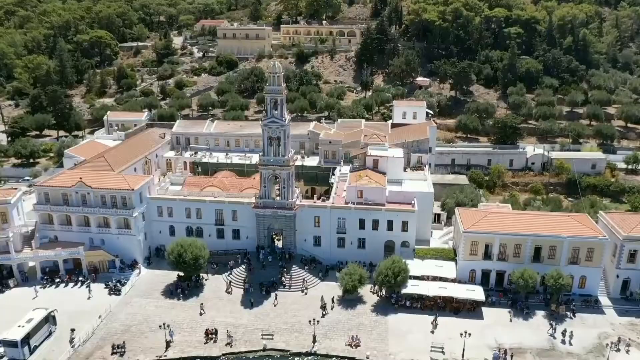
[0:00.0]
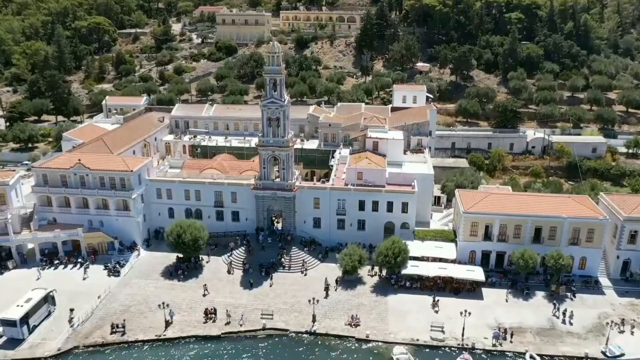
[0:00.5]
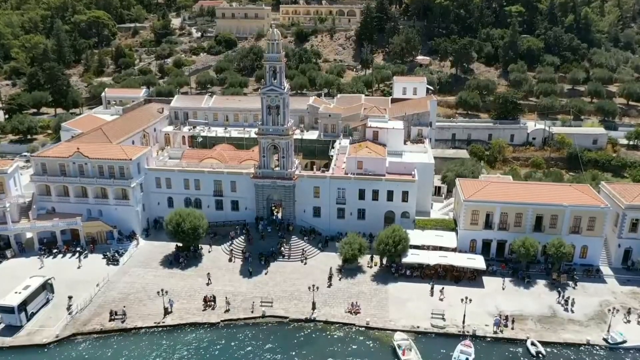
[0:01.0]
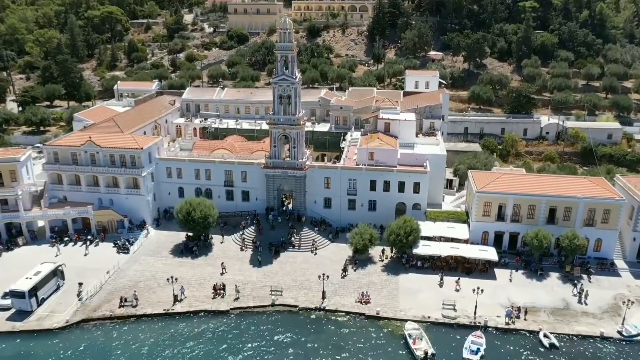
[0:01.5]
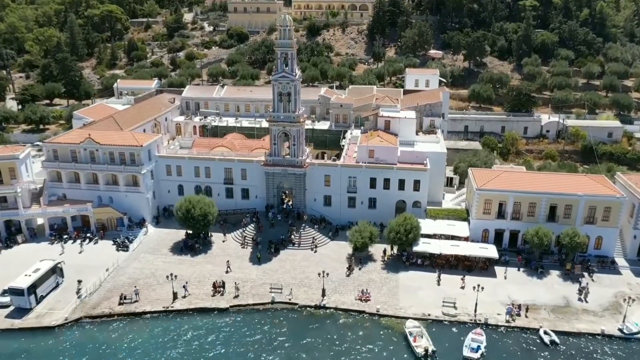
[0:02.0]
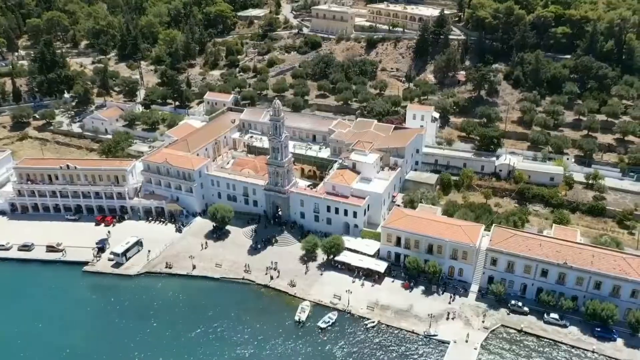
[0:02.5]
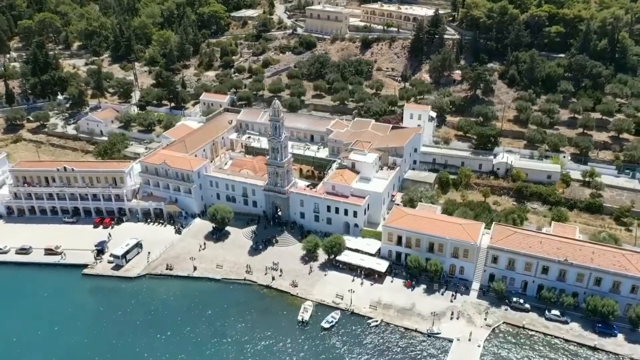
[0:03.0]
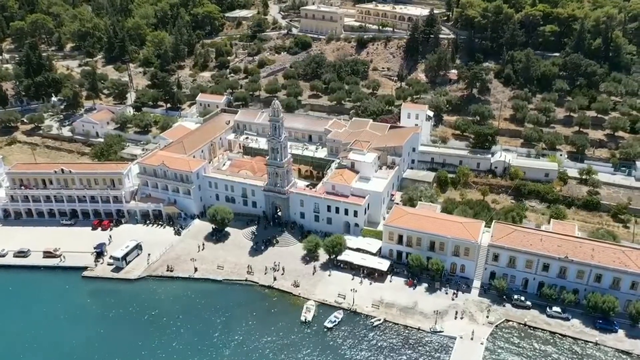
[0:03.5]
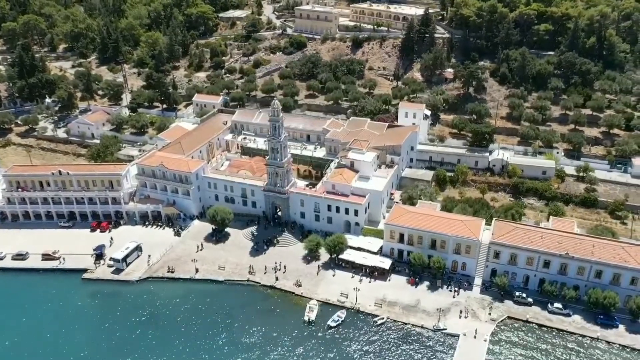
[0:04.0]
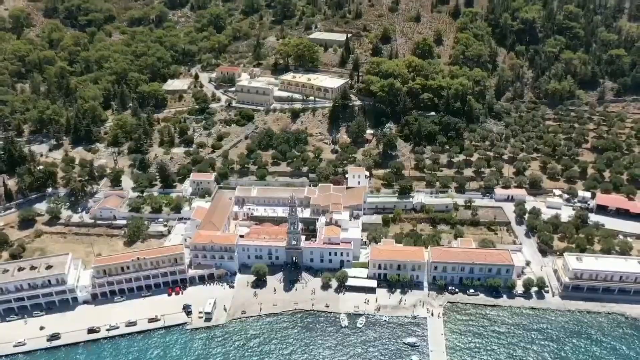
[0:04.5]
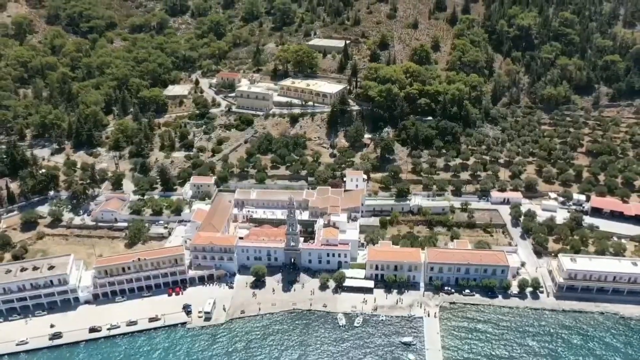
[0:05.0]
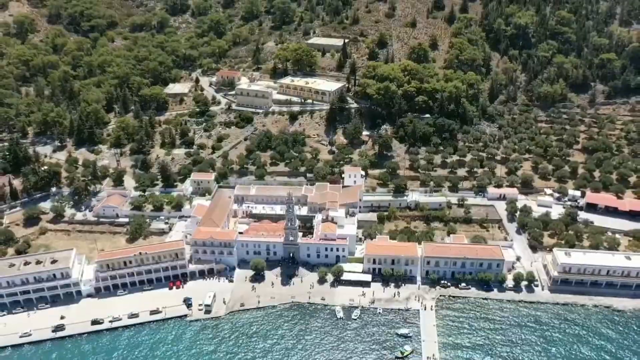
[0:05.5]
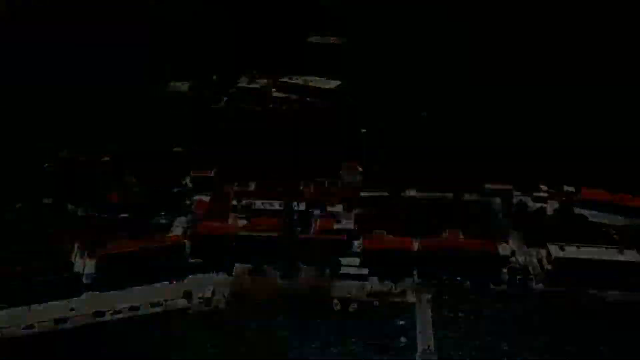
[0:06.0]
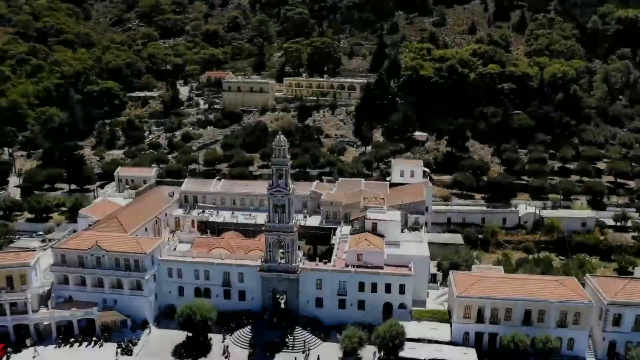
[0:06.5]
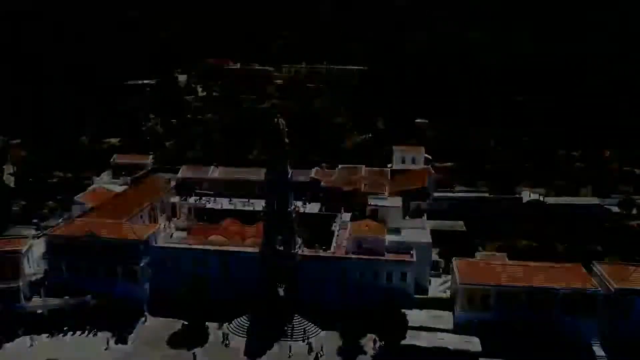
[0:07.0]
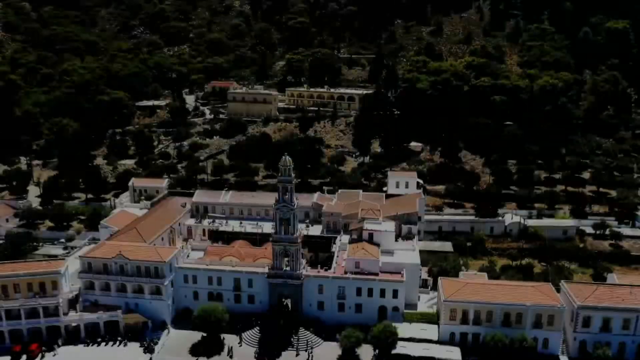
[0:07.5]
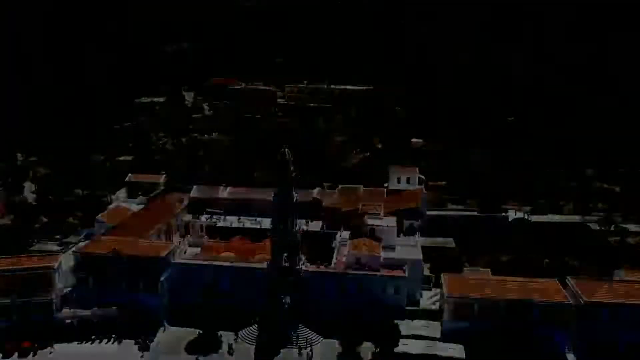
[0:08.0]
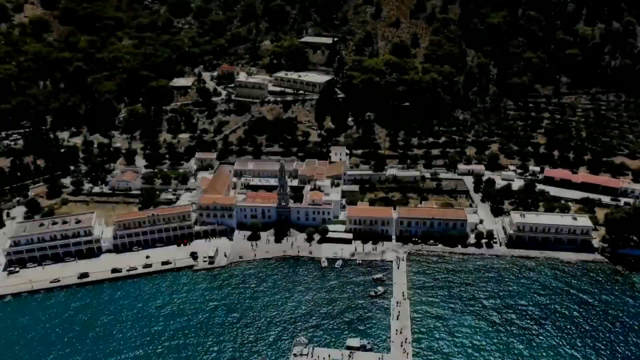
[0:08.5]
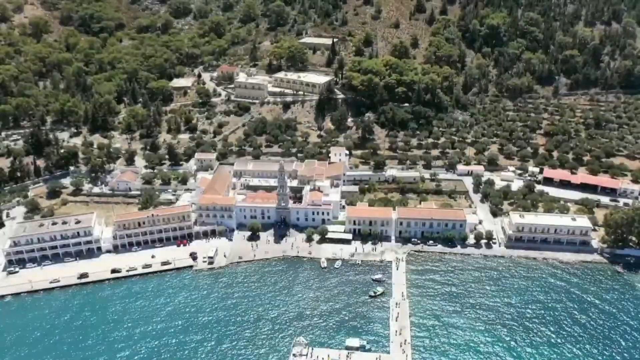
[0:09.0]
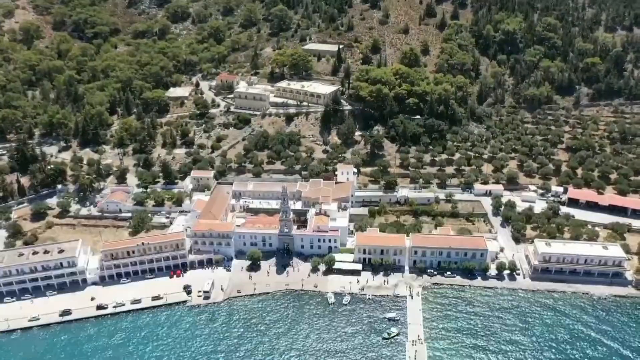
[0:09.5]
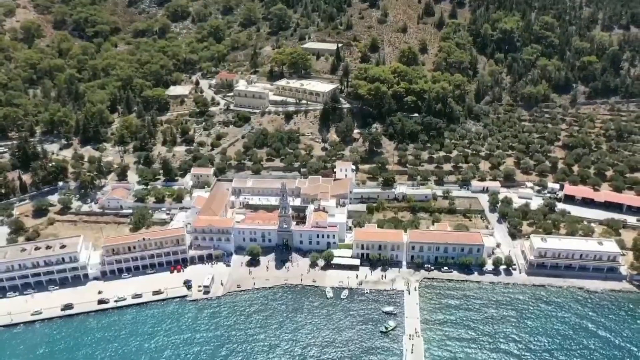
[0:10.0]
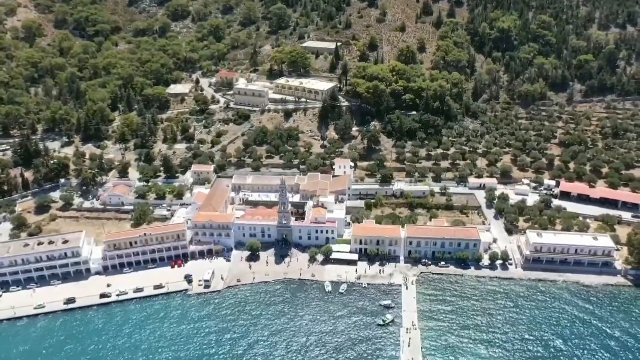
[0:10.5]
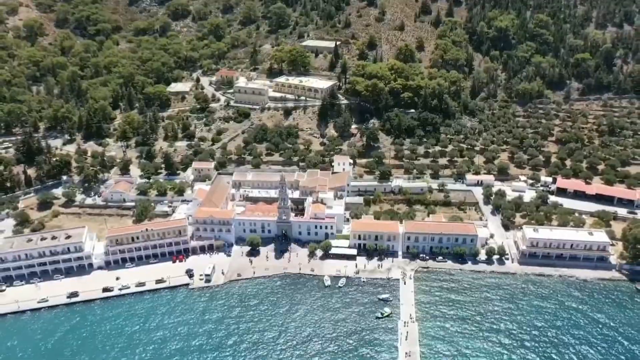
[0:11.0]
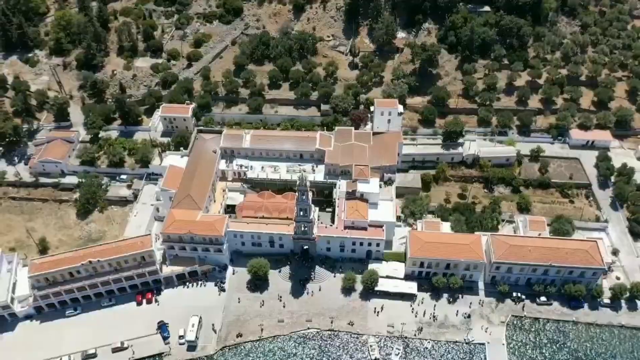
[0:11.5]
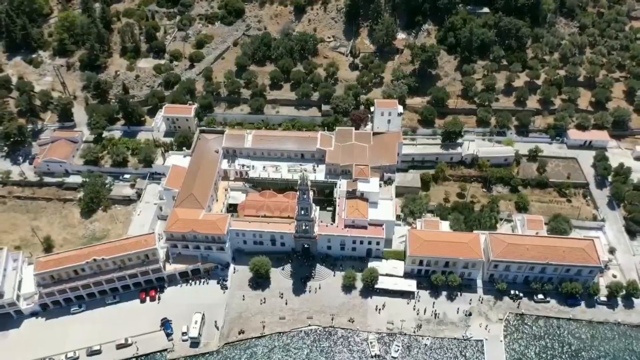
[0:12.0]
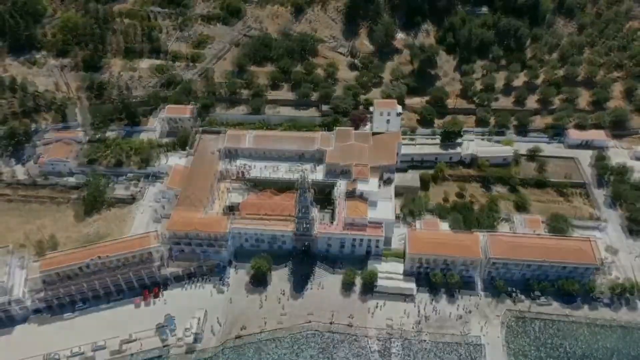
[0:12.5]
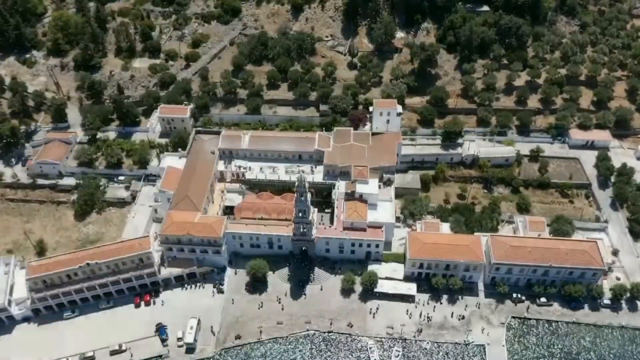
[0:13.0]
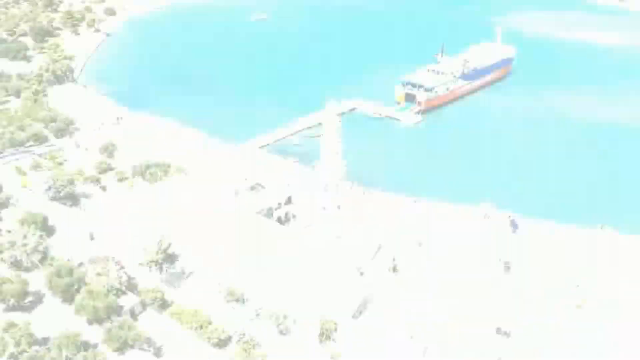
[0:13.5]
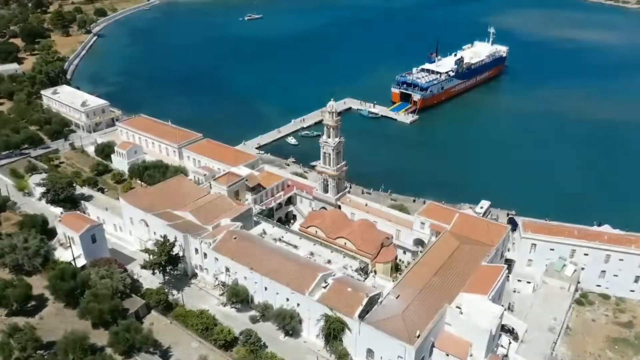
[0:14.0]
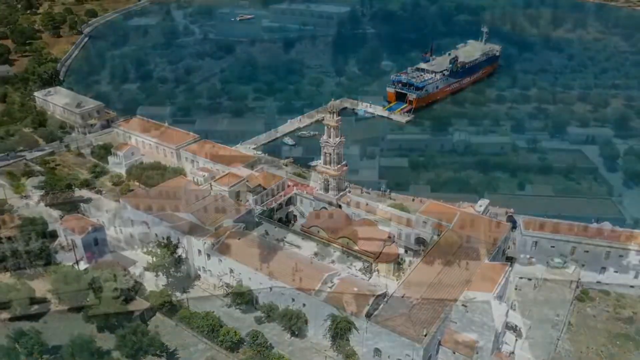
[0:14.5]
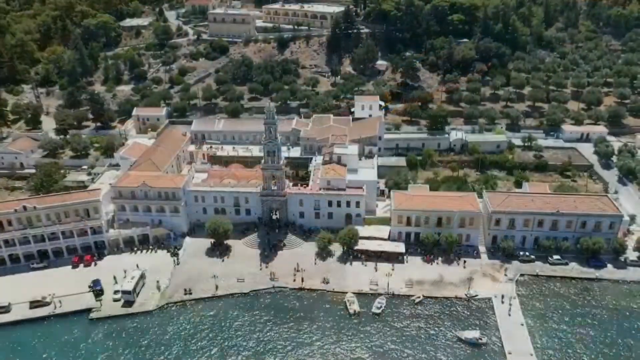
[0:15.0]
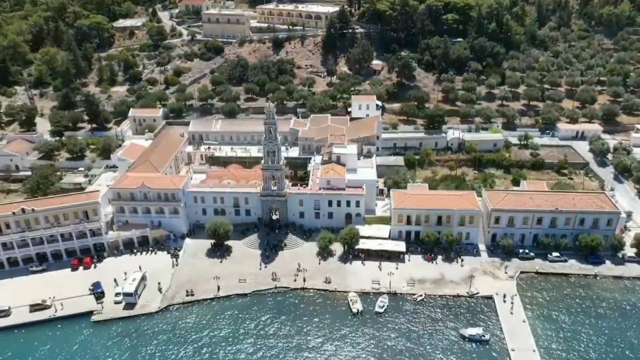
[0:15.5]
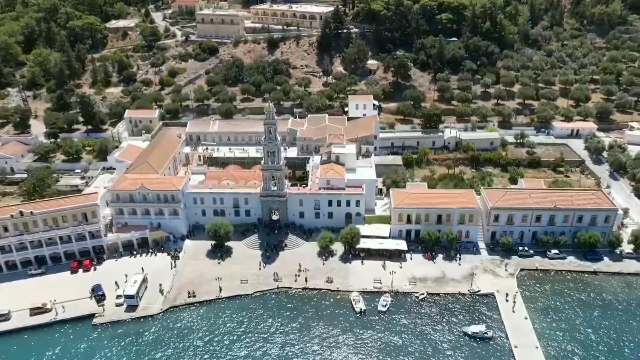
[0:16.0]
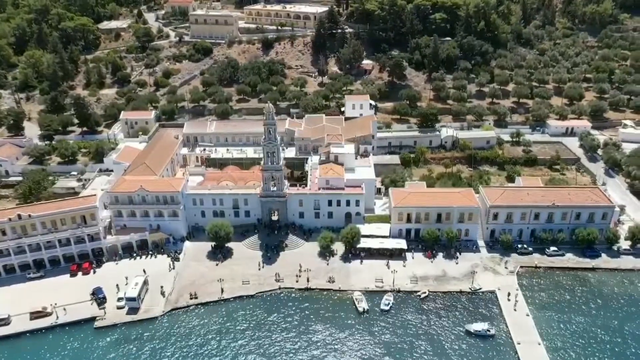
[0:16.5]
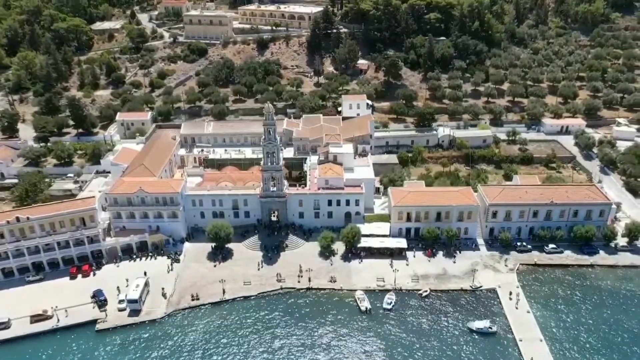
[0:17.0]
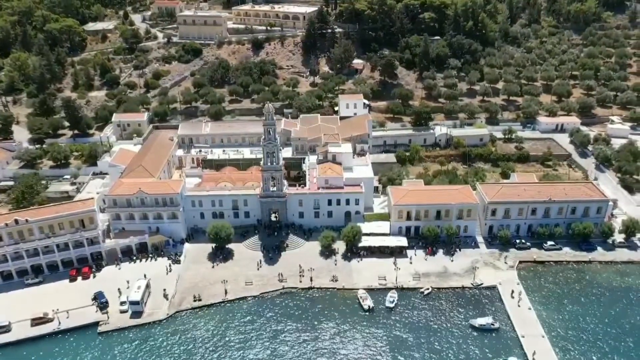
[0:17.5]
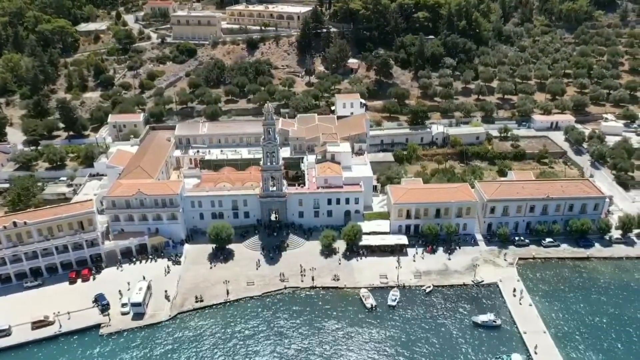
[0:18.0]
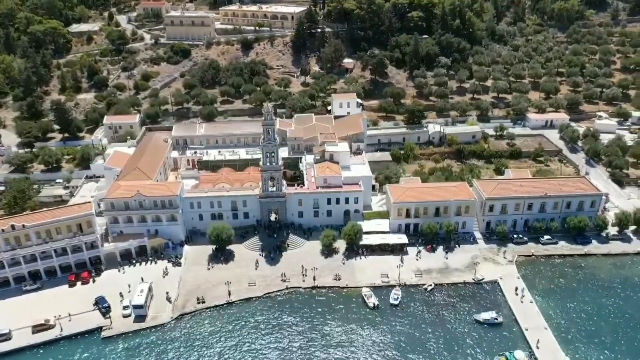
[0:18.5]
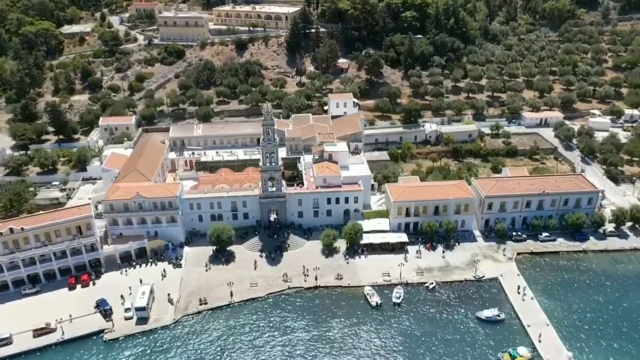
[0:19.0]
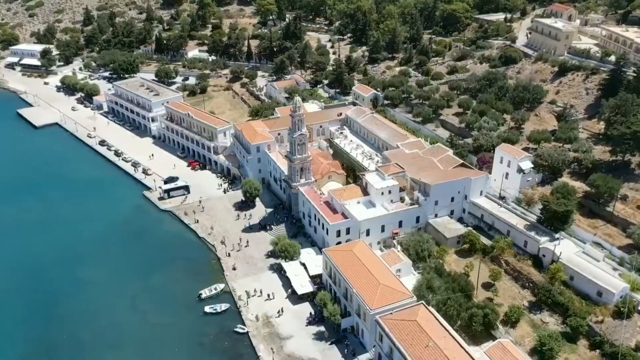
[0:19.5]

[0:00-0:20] Shot by a drone, the aerial view looks down as the camera tilts down and then back up. A large white, cathedral-looking building that is four or five stories tall is shaped like a square, with a courtyard in the middle. To the left and right are buildings of the same color; all the buildings are white, and all their tops are light tan. People walk on the concrete around these buildings, and trees are spaced among them. In the background, other buildings stand up on a dirt hill, with trees and forest around them. In front of this area is a body of water with a pier; boats are parked around the pier, and people are walking on it.